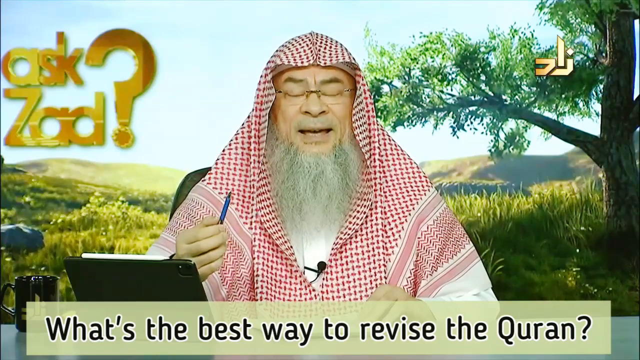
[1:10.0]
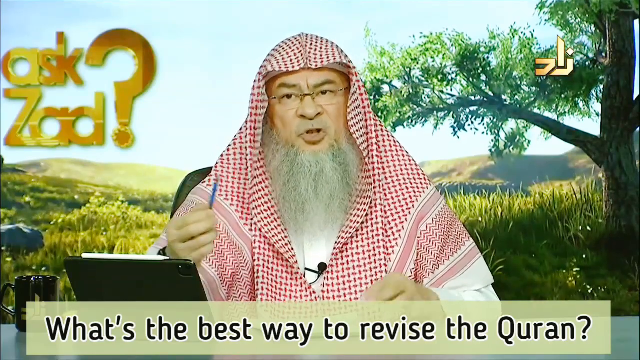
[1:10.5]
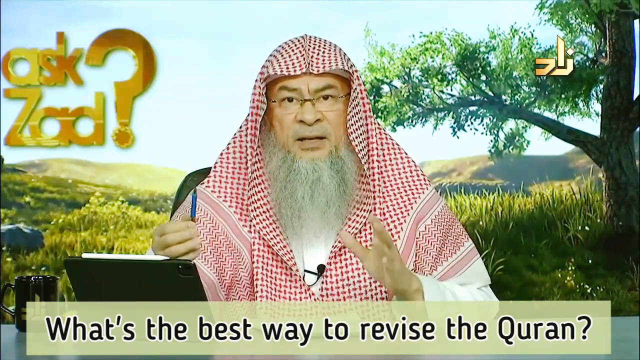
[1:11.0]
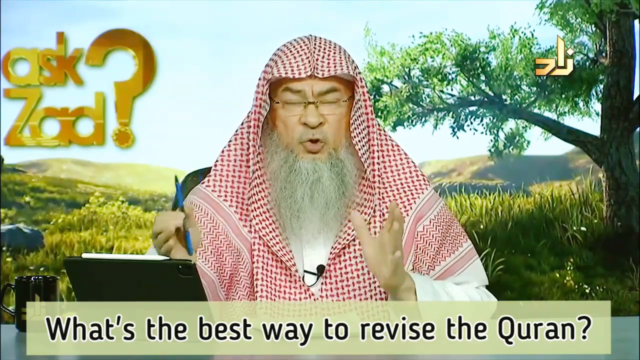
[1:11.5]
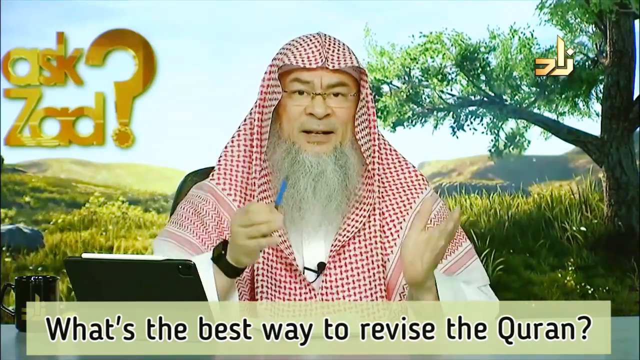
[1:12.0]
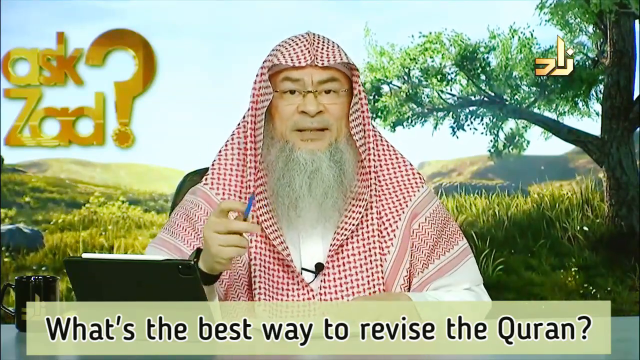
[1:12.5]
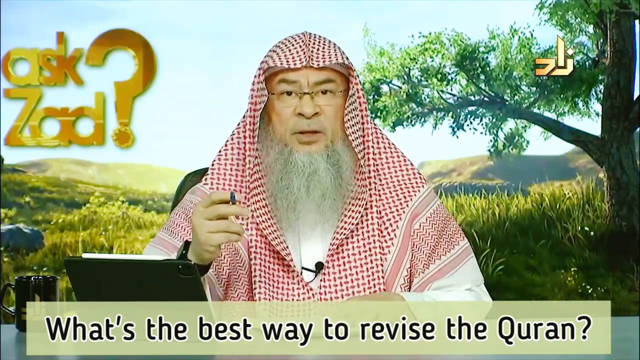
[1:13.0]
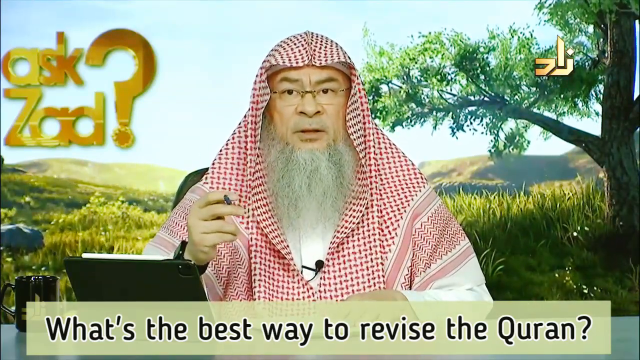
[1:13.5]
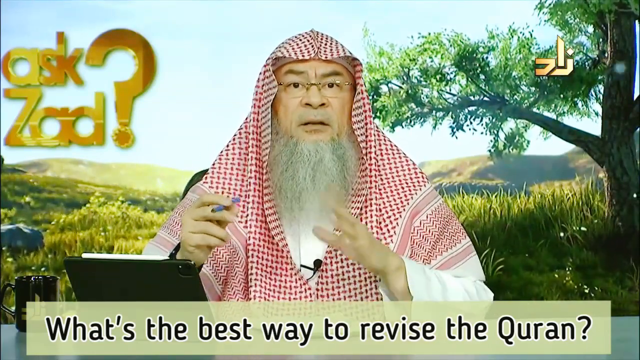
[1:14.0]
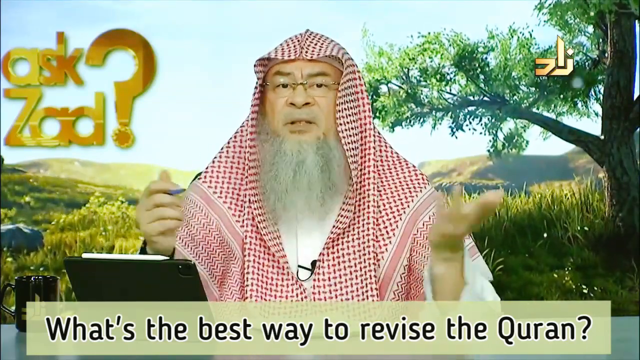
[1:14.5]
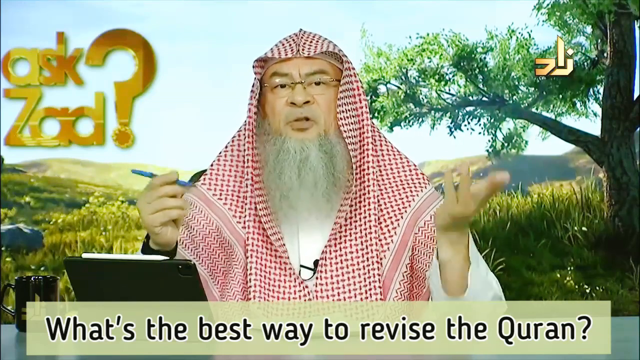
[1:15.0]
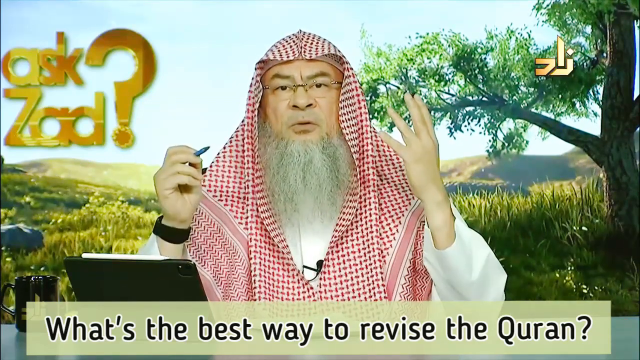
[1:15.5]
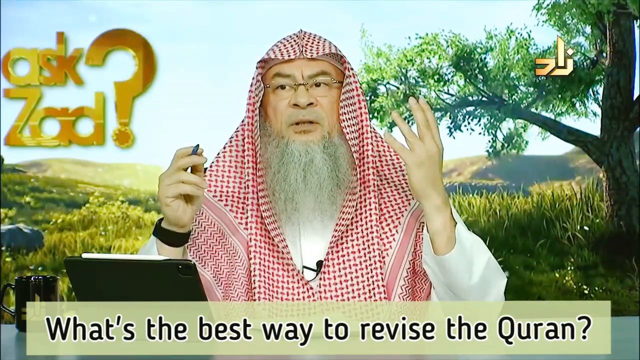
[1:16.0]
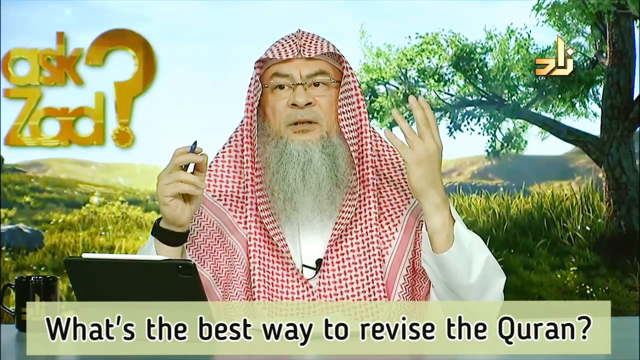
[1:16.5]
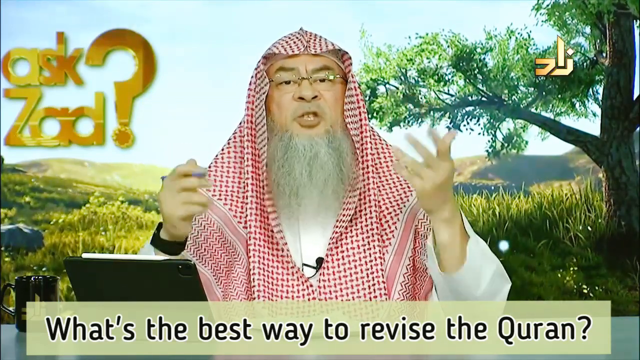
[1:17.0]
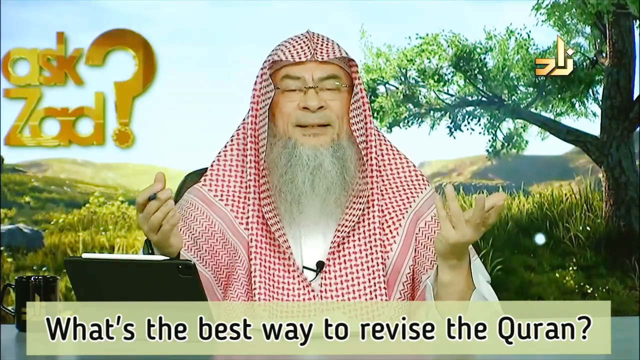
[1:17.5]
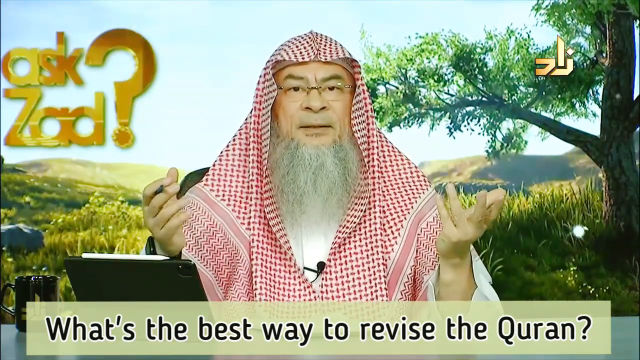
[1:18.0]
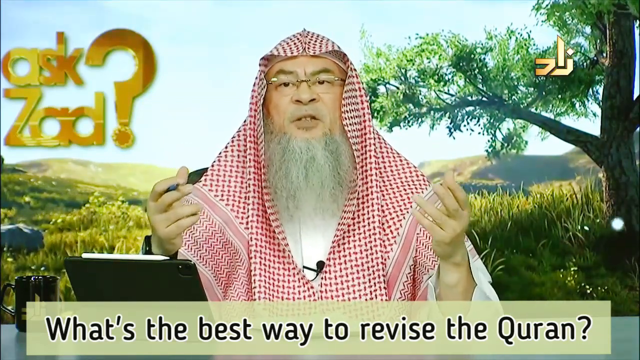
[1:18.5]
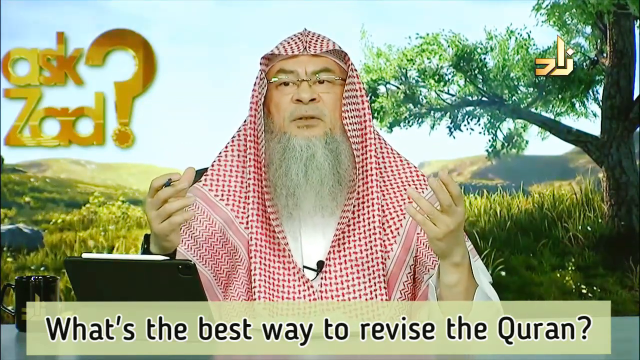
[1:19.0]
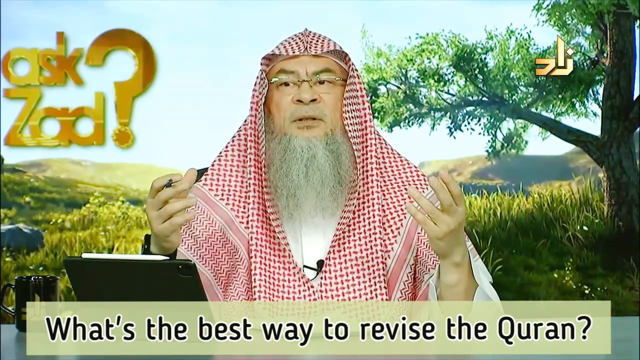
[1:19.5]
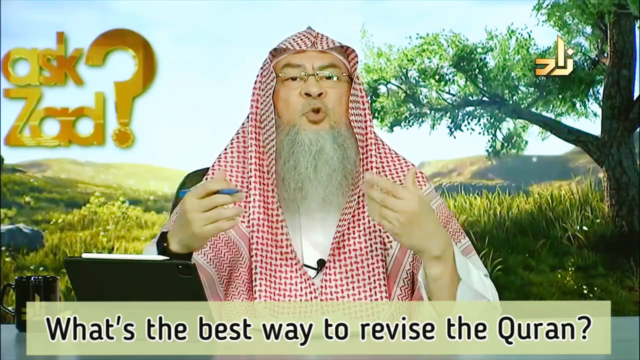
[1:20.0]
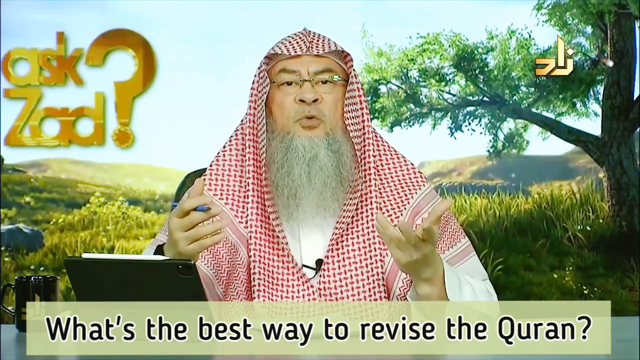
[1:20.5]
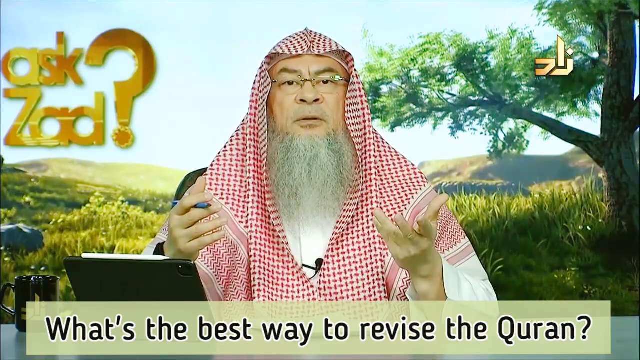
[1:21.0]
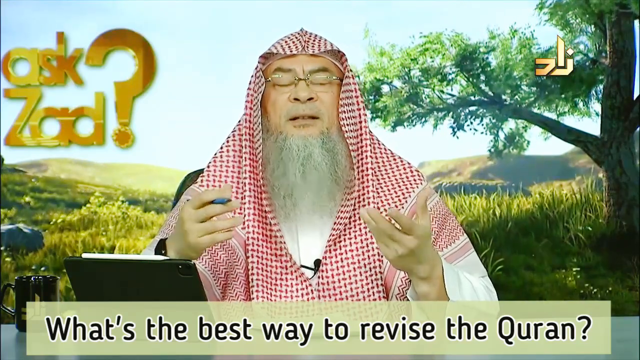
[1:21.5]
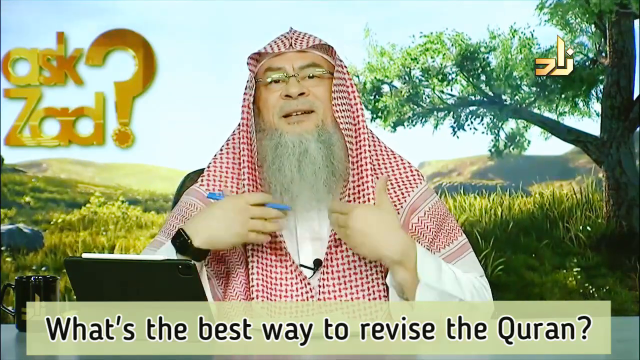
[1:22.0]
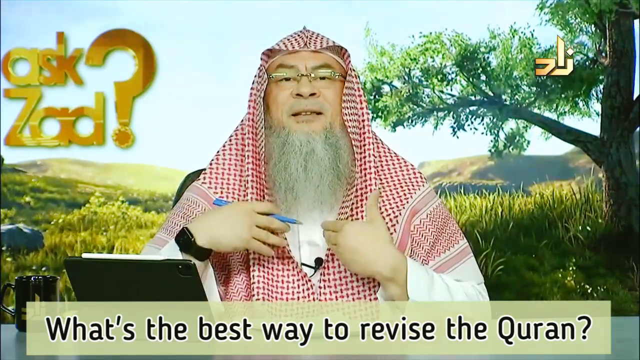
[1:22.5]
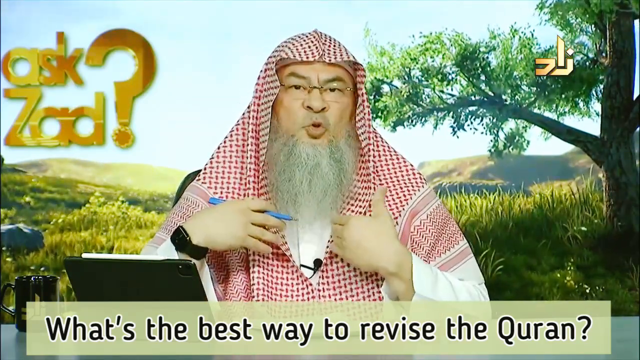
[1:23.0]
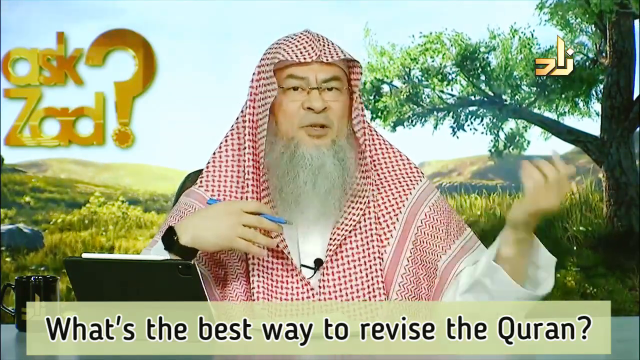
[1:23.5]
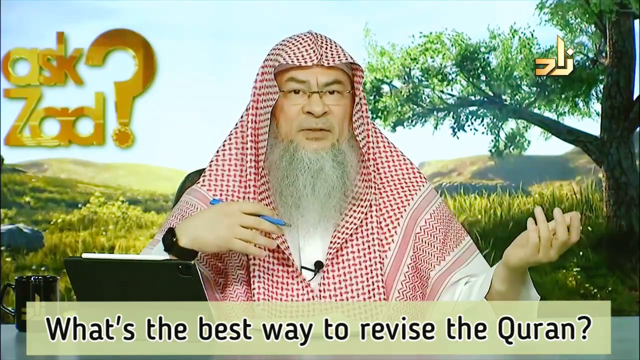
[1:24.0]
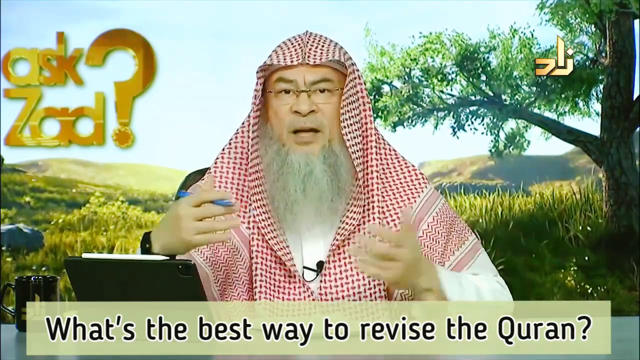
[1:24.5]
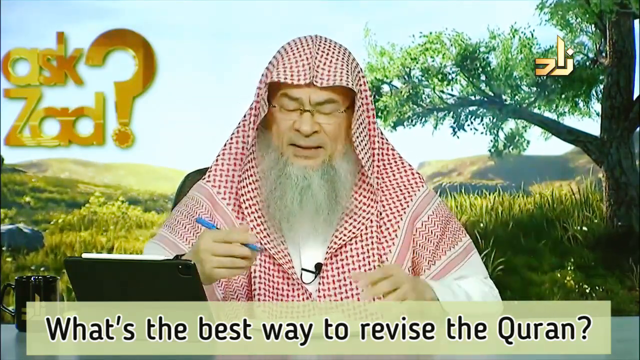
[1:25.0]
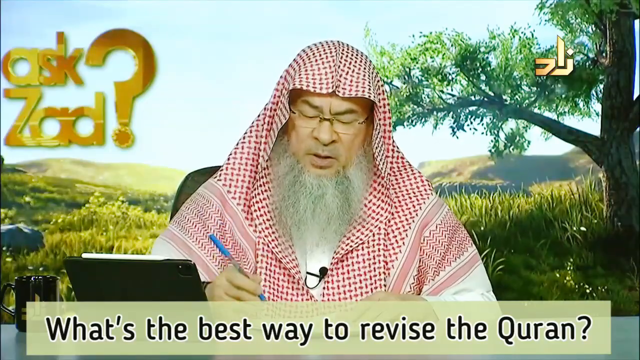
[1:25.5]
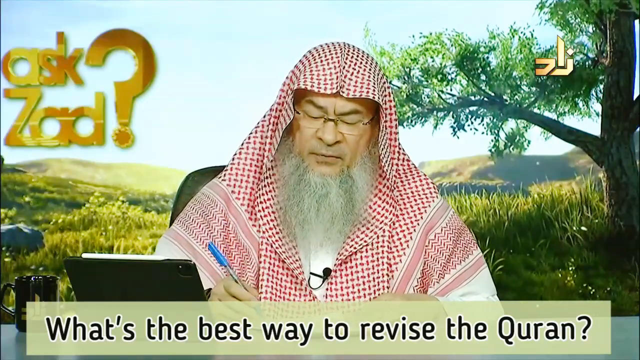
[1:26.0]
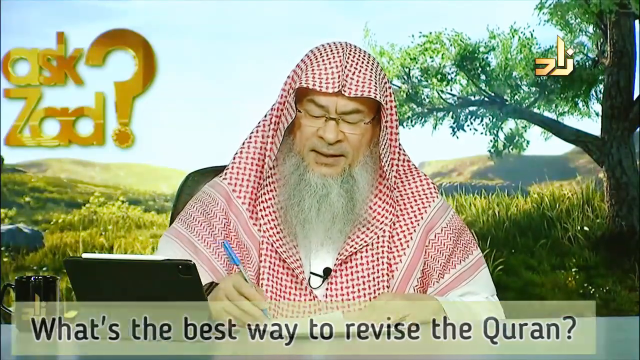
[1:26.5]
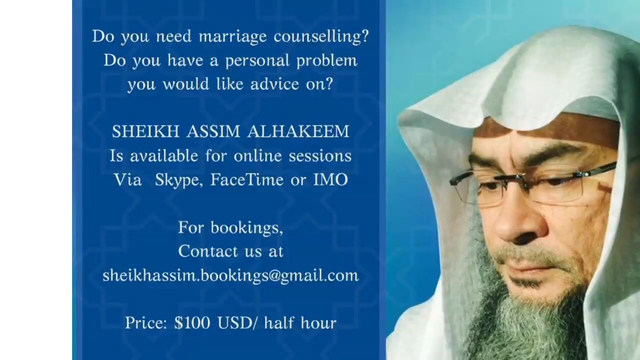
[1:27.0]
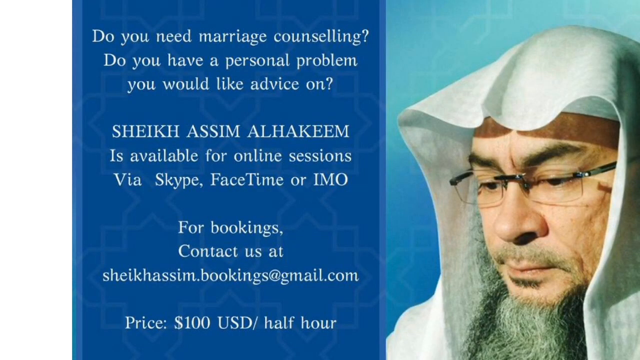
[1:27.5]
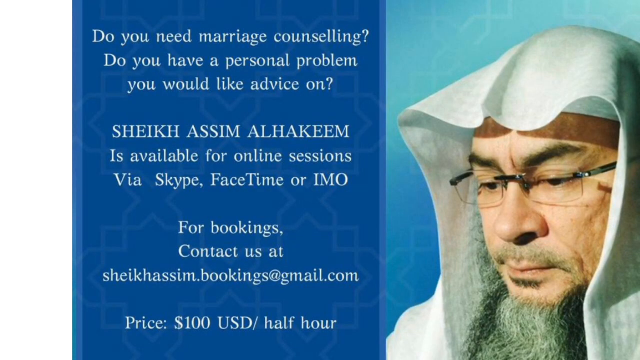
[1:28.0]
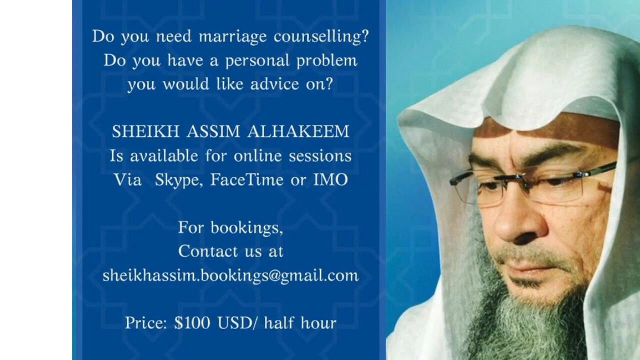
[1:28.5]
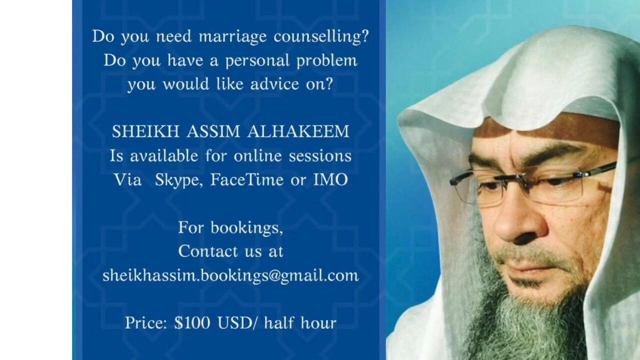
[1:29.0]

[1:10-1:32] The blue pen is still in his right hand as his left hand comes up to gesture alongside it, with both hands up towards him. After several hand motions, his hands go towards the table in front of him, where he prepares to write with the blue pen in his right hand. The next shot is the same picture of him as at the beginning, on the right, with a block of white text on a blue background on the left-hand side. The text reads, "Do you need marriage counselling? Do you have a personal problem you would like advice on? SHEIKH ASSIM ALHAKEEM is available for online sessions Via Skype, FaceTime or IMO. For bookings, Contact us at sheikhassim.bookings@gmail.com". He charges 100 USD per half hour for his sessions. The video ends with this title card.